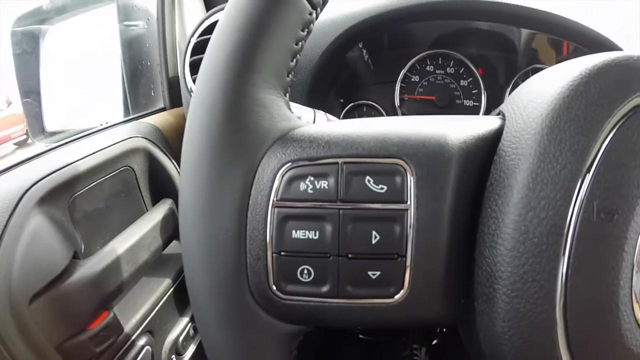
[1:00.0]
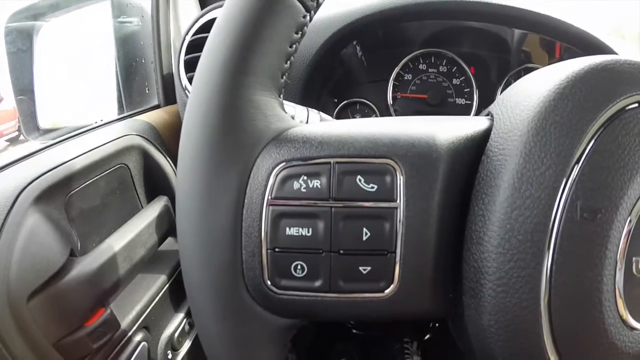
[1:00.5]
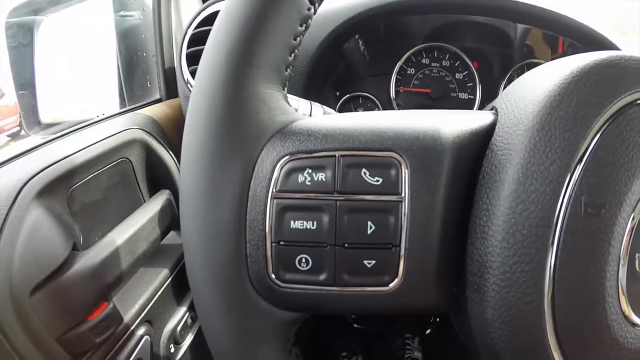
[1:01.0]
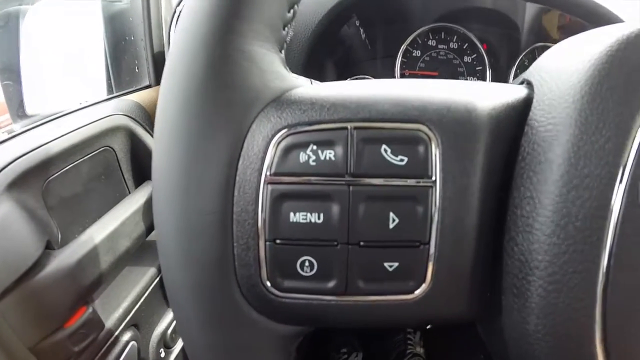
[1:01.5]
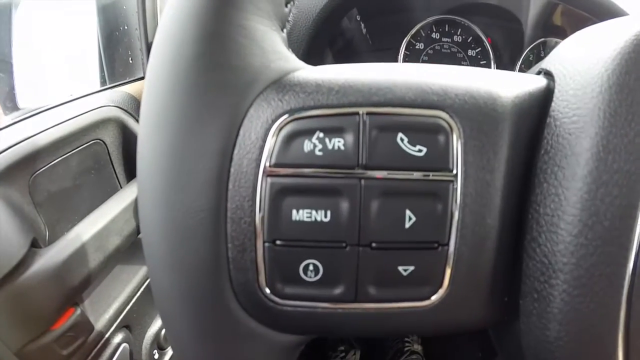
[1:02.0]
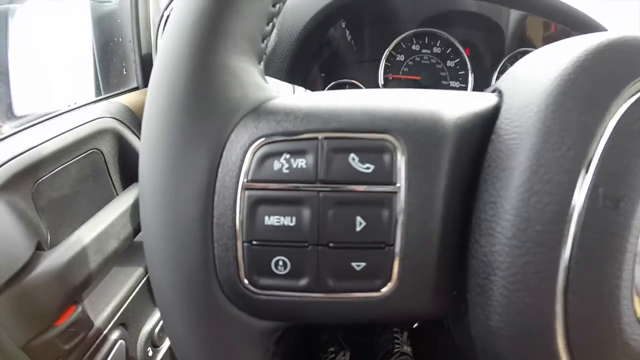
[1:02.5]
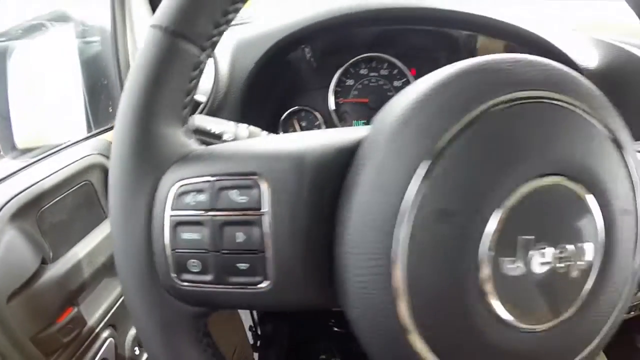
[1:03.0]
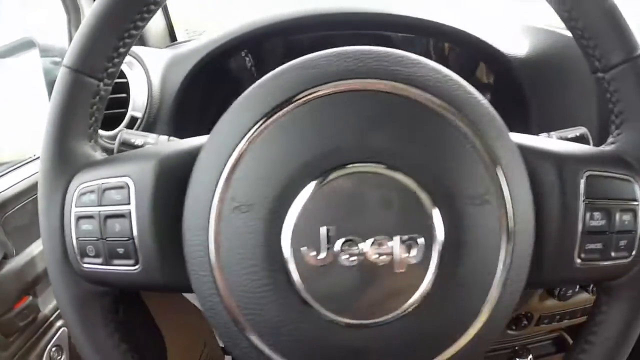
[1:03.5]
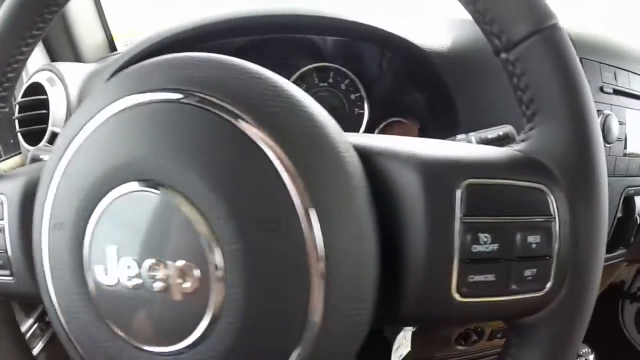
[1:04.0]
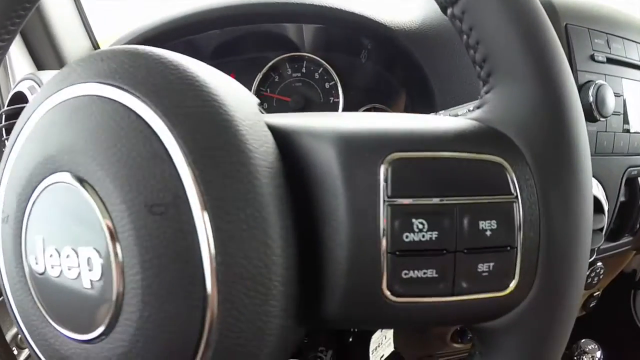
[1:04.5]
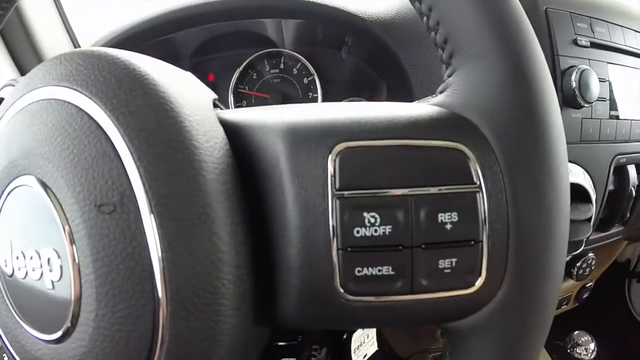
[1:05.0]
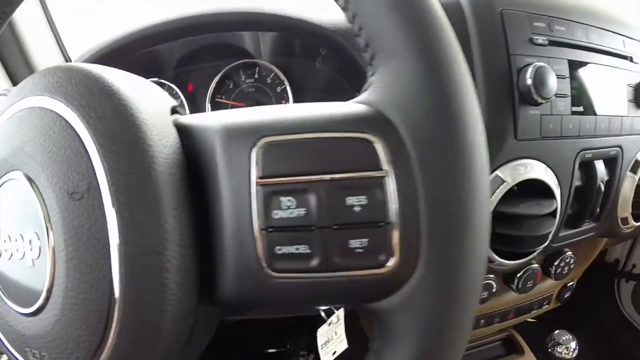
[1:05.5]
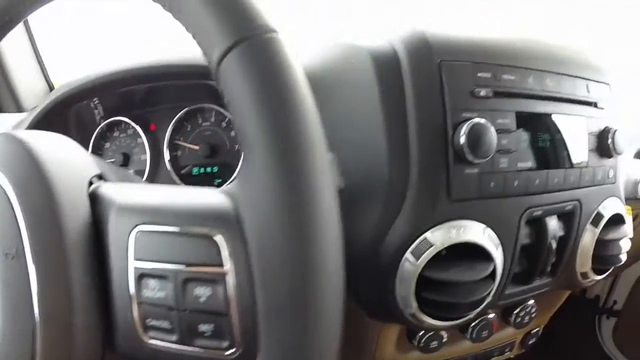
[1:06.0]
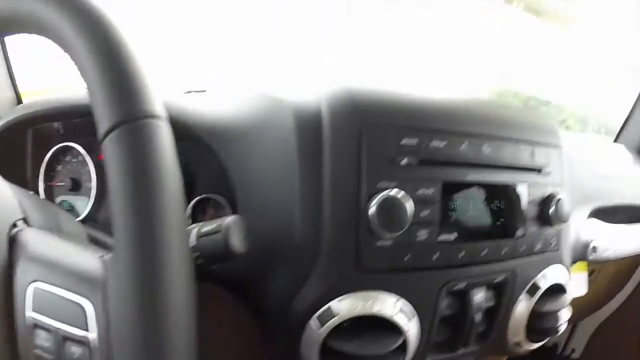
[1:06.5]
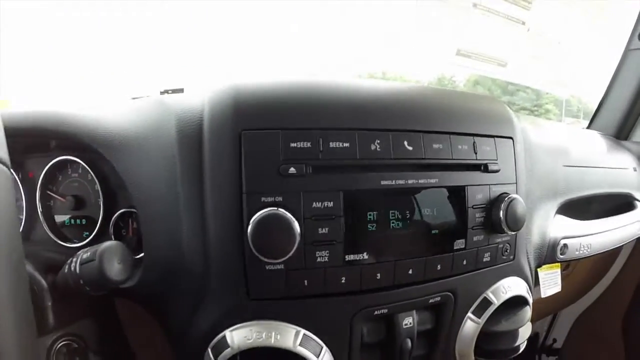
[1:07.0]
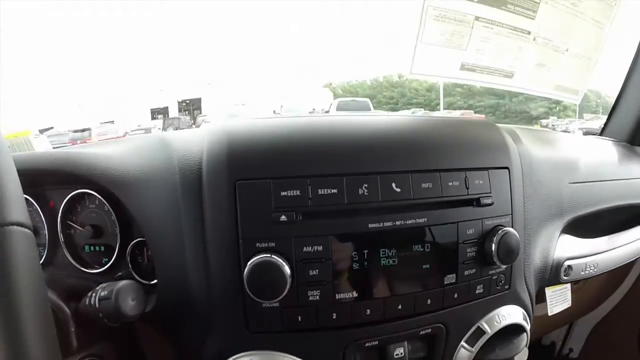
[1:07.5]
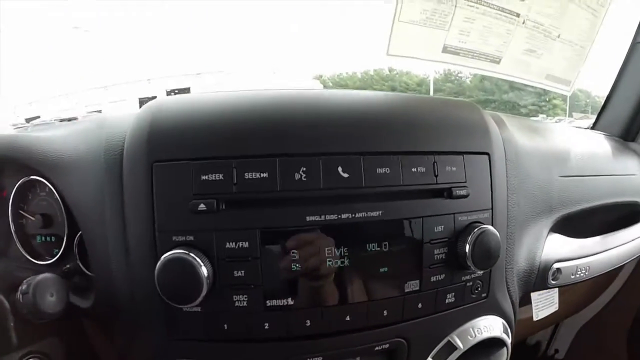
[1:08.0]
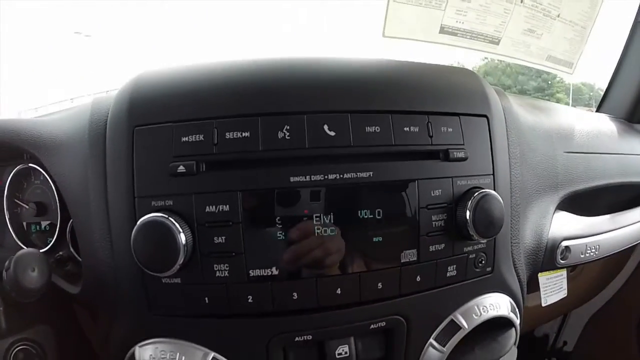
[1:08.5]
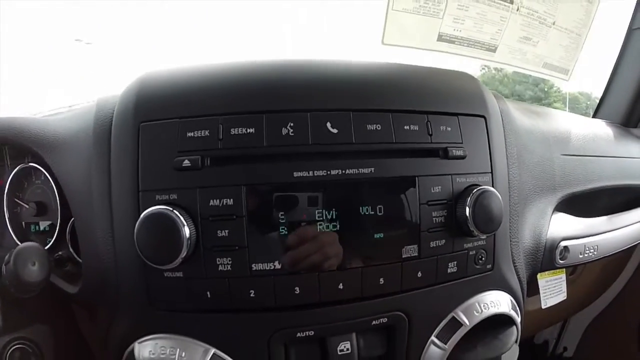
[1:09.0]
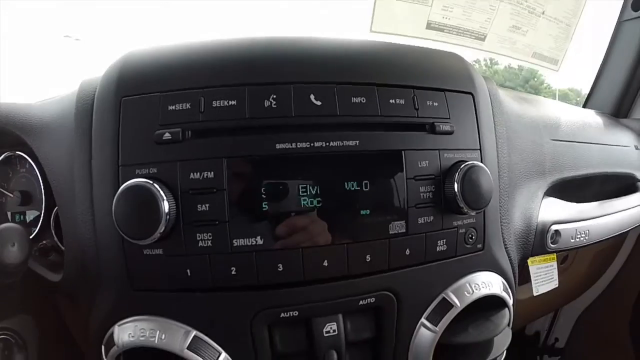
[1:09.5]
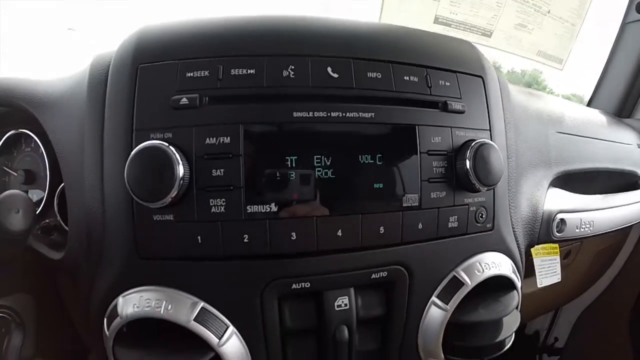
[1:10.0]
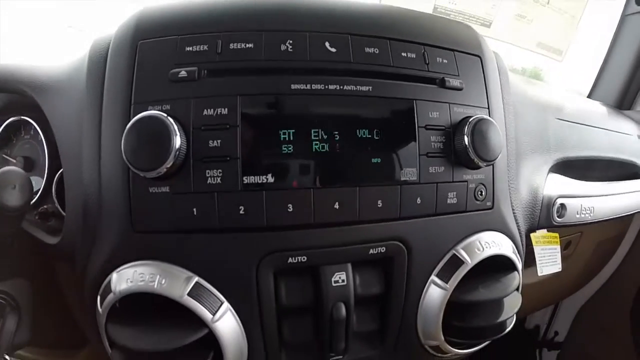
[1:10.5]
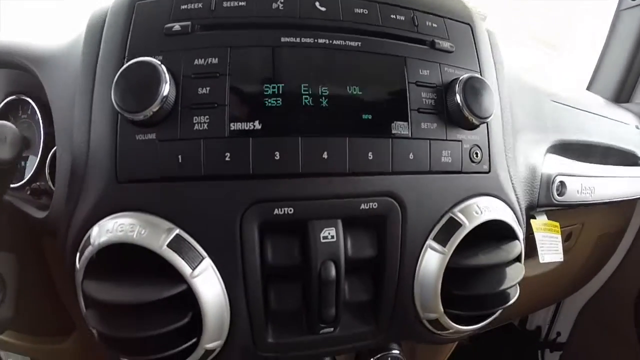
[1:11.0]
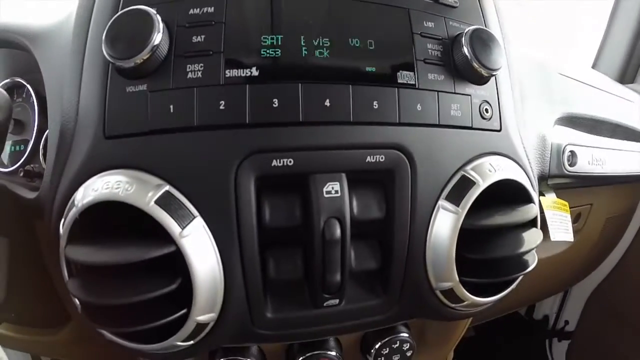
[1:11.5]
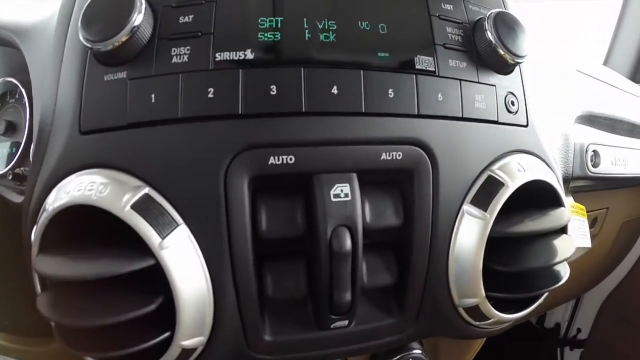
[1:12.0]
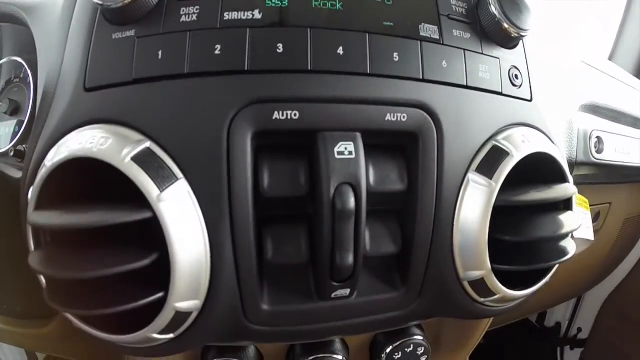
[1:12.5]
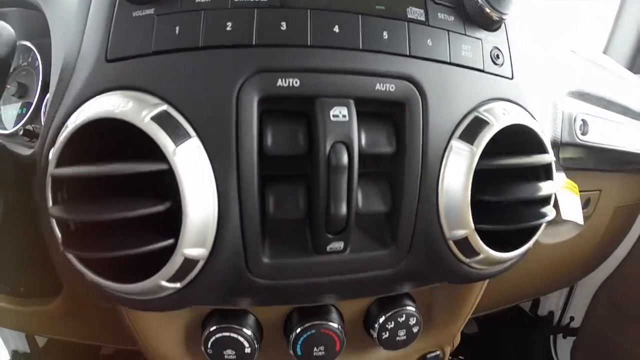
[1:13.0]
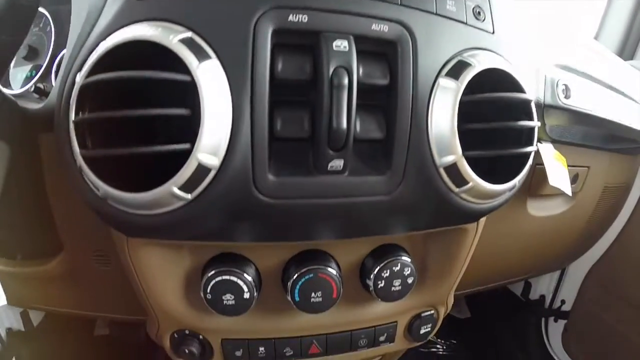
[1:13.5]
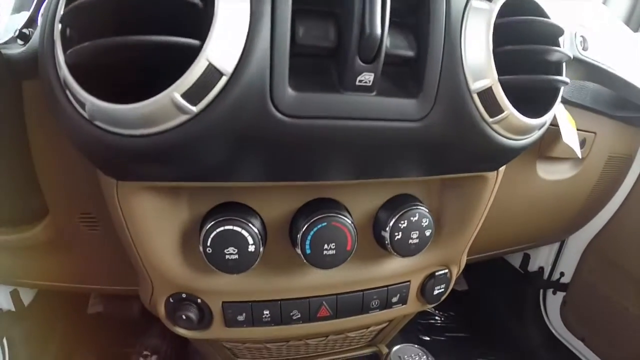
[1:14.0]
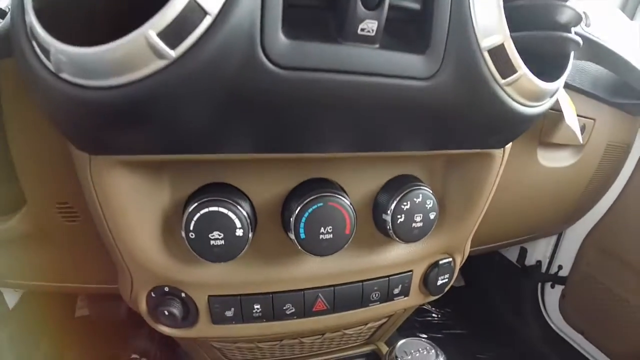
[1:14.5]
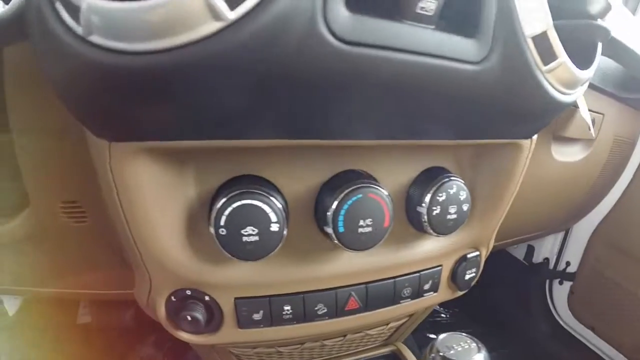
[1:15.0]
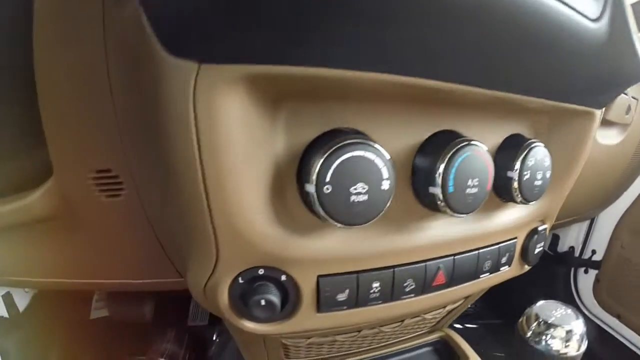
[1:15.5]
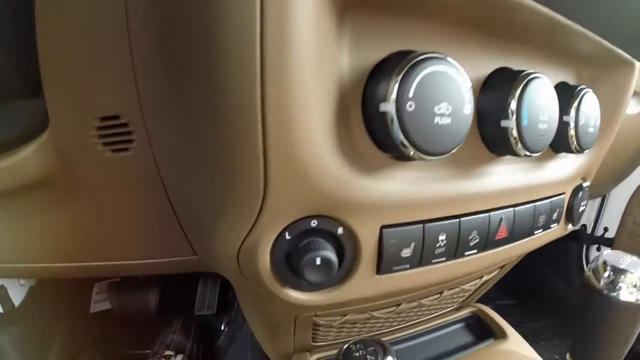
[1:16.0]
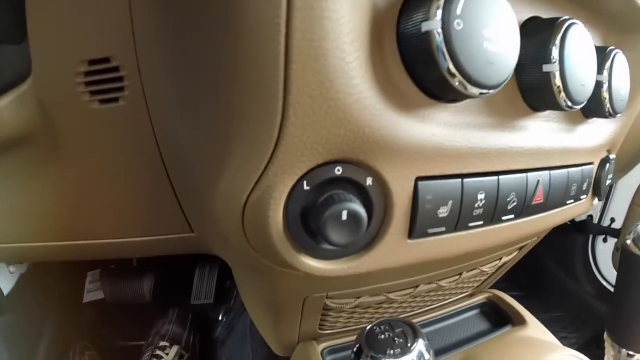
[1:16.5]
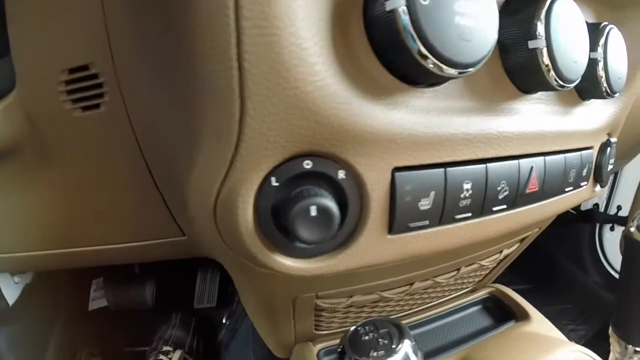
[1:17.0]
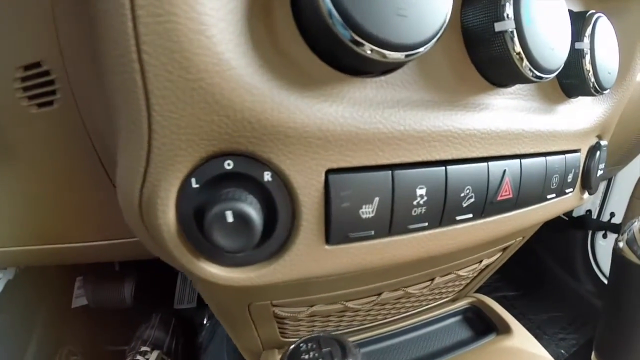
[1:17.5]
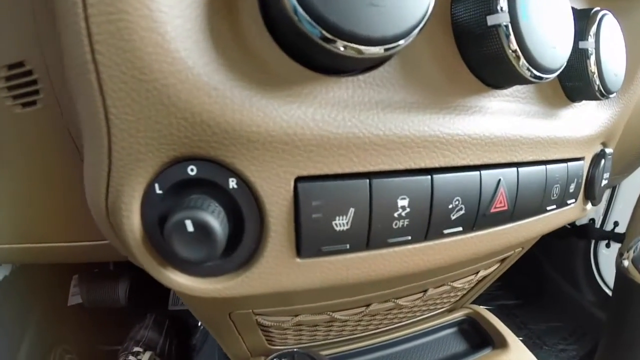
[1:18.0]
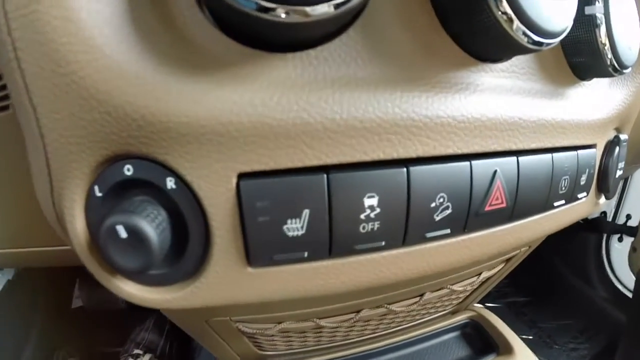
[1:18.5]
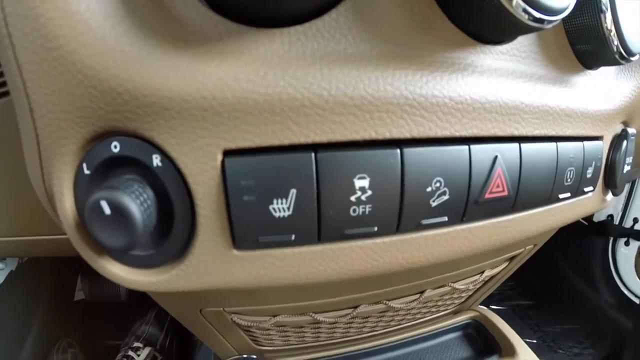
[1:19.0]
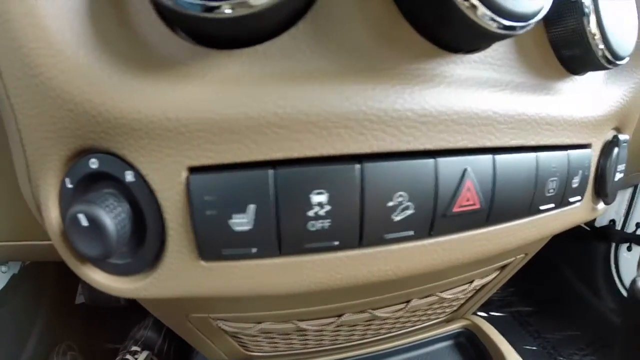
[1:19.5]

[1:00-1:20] A steering wheel is shown with six control buttons, including a phone button, one that says "menu," a play button, what looks like an information button, and a down button. The speedometer is in the background. In the middle of the wheel, on the horn area, it says "Jeep." The camera moves to the radio, which is kind of flashing digital numbers and letters. Then dials for the air conditioner and for seating features such as heat are shown. The rear view mirror outside the window is visible; it is black with a shiny mirror surface.